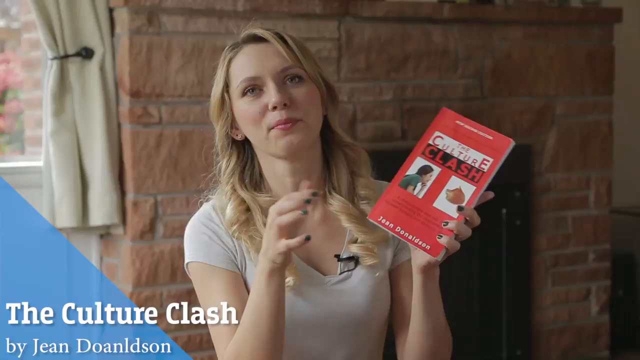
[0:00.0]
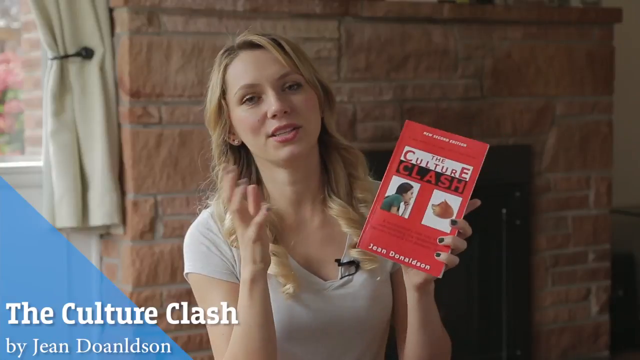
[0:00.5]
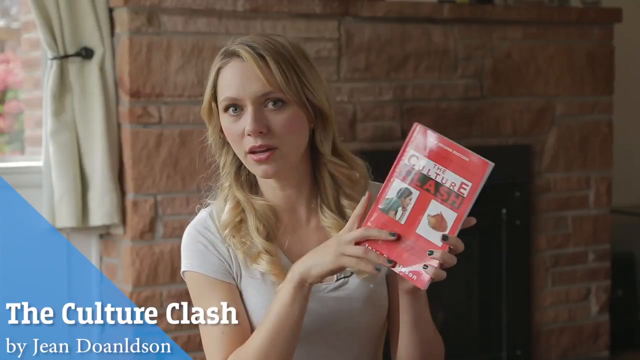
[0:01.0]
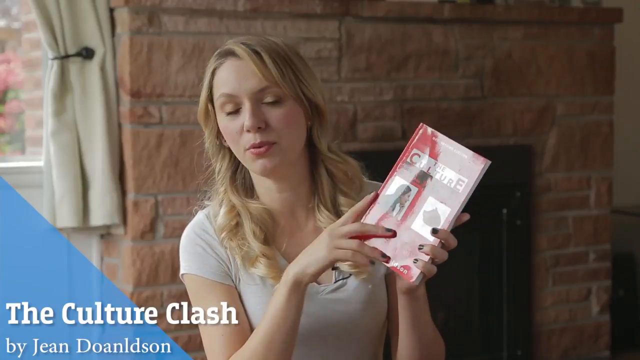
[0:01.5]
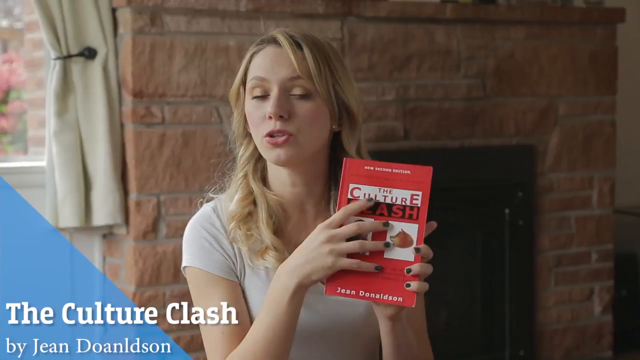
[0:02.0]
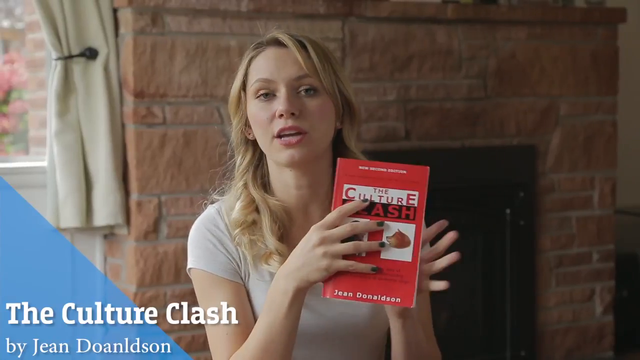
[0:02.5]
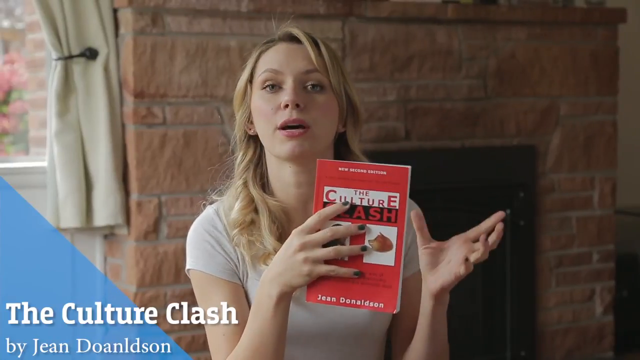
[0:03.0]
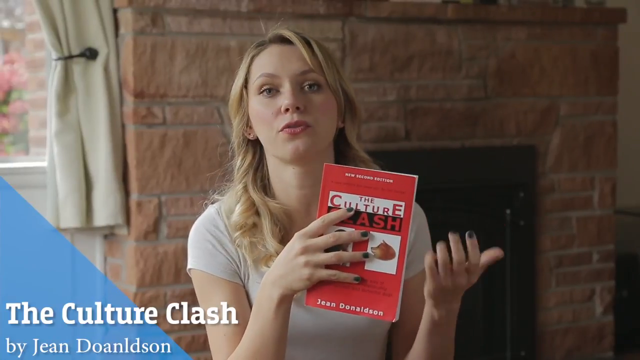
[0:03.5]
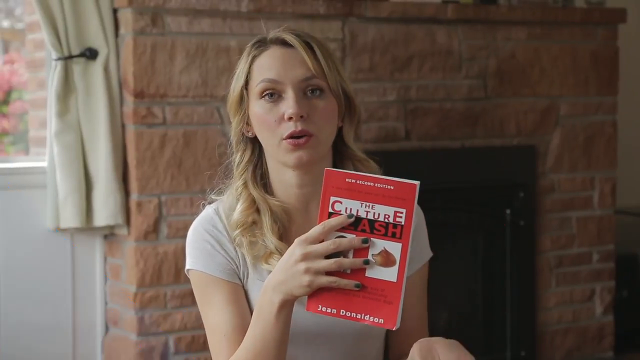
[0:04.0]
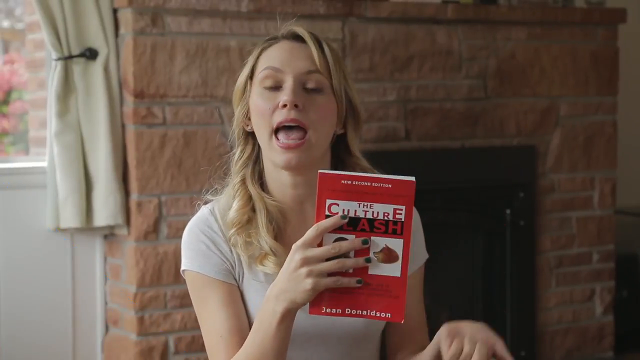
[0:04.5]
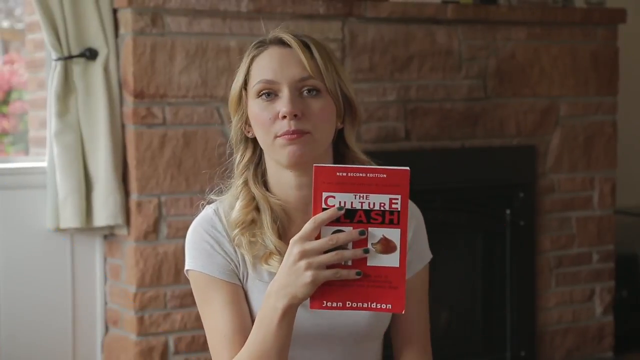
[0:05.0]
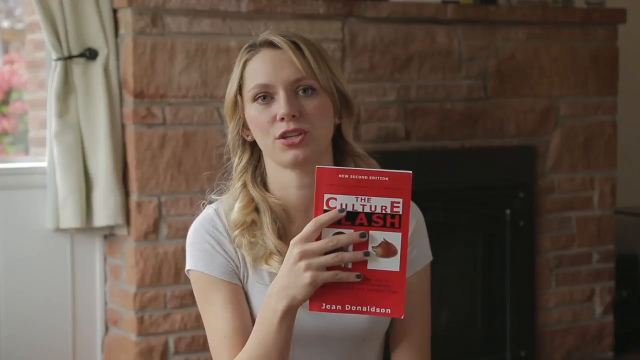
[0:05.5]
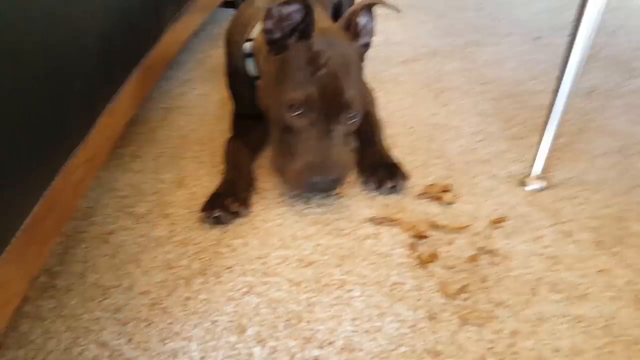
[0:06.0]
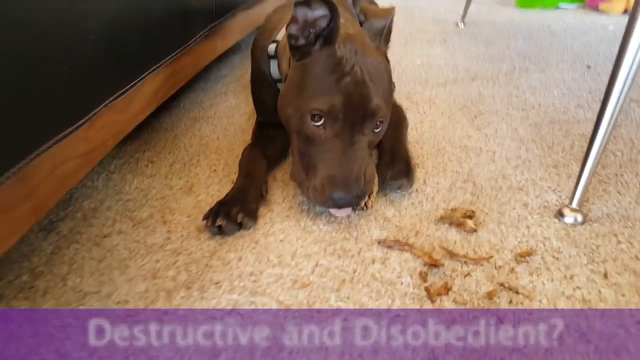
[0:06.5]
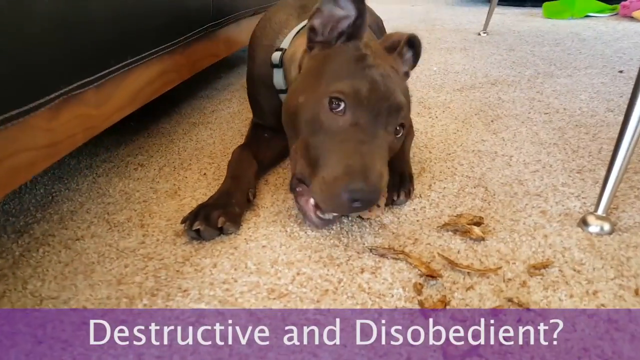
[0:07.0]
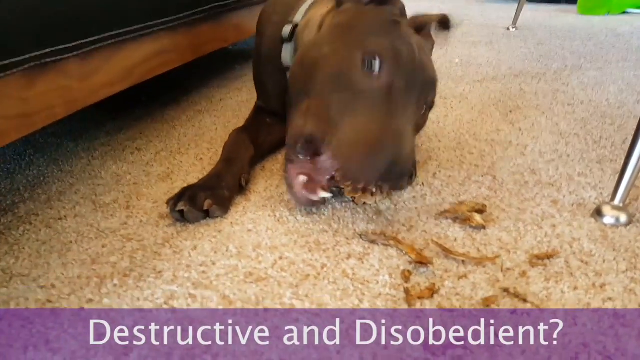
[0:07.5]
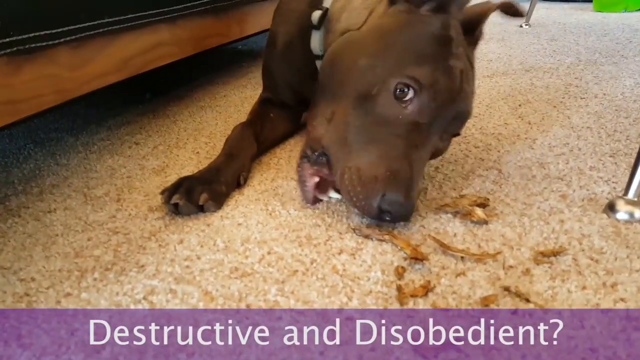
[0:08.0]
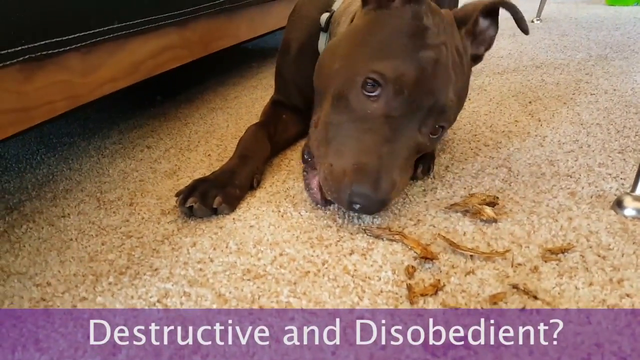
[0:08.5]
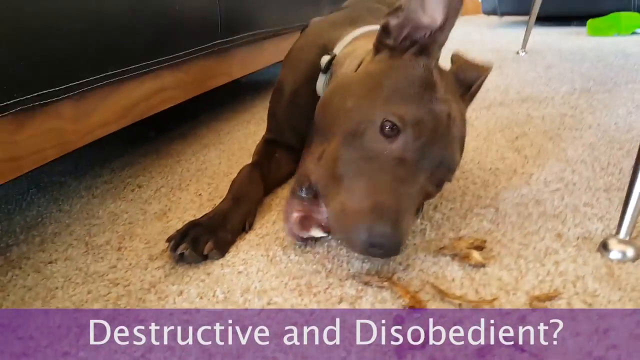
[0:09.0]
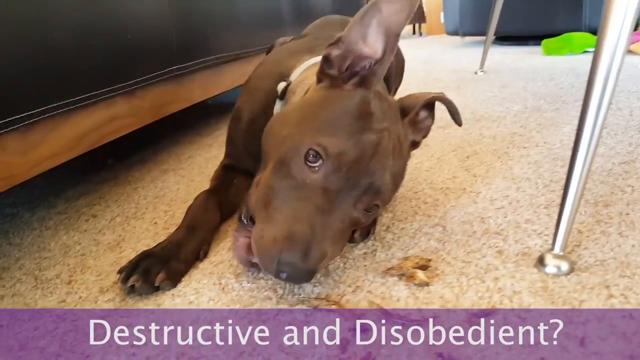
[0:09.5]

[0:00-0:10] The video opens on a white woman in her mid to late 20s holding up a red book. Her fingernails are painted, and she is standing behind a brick house, with the window and curtain of the house visible. The book is titled "culture clash", and its cover shows what looks like a human being facing what is probably an animal. The name of the book's author is also visible. Next, a brown dog is shown eating on the carpet, looking at the camera while it eats.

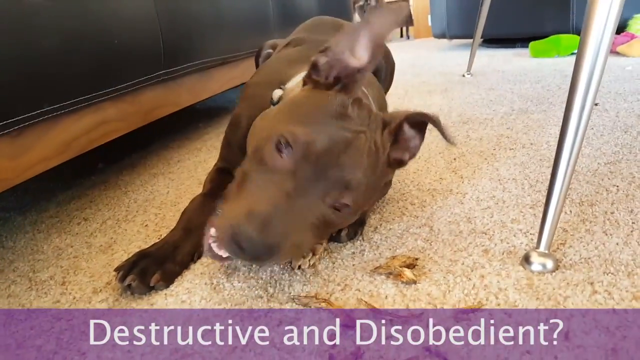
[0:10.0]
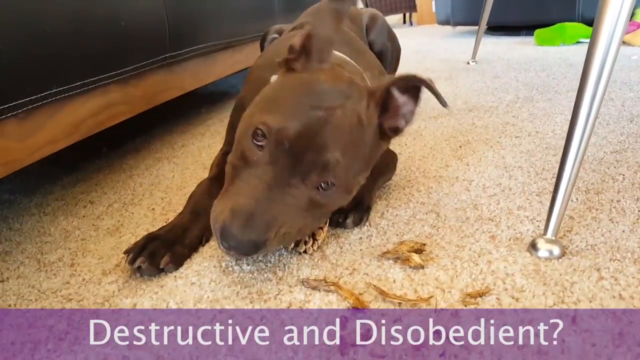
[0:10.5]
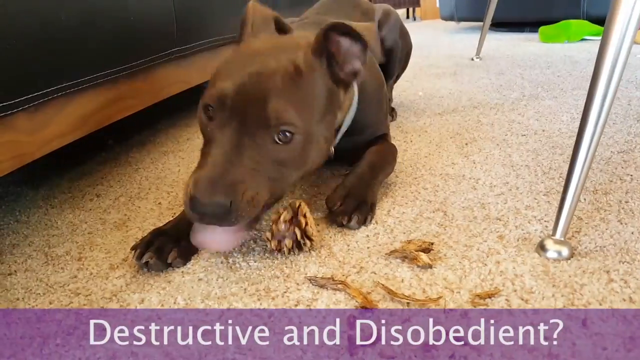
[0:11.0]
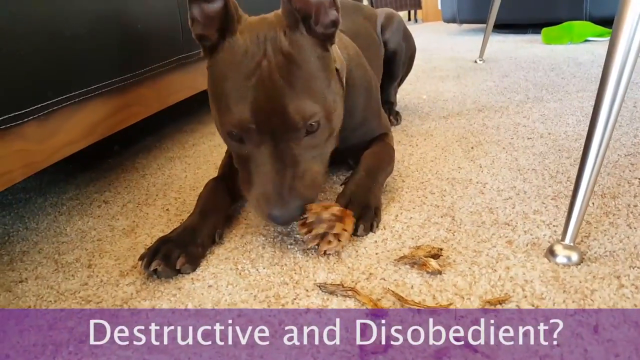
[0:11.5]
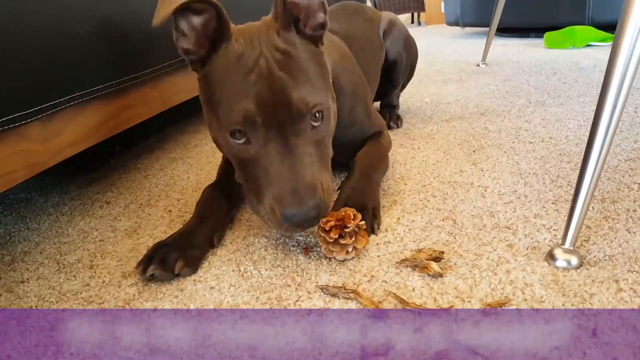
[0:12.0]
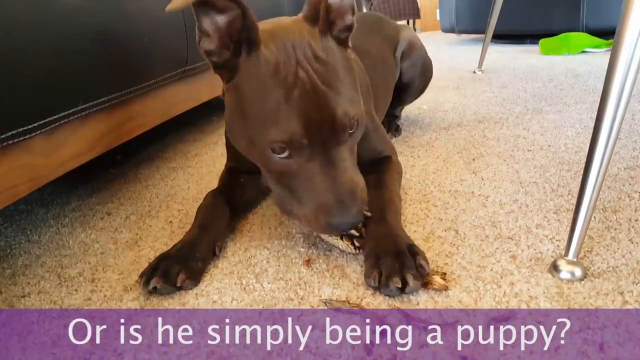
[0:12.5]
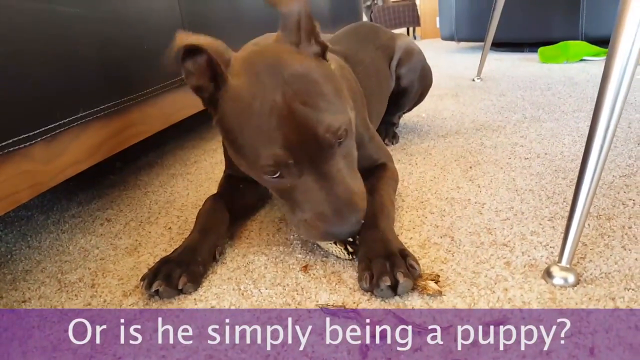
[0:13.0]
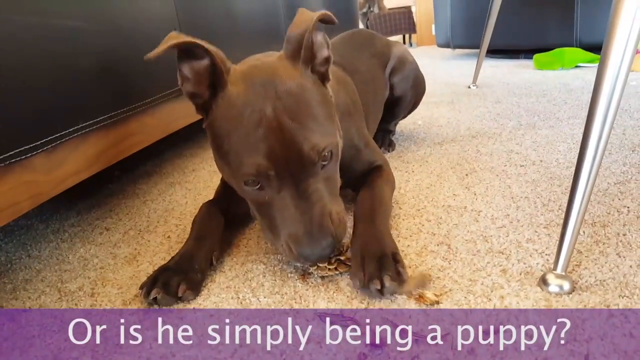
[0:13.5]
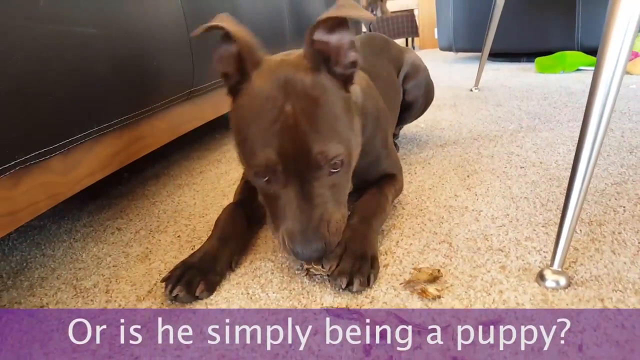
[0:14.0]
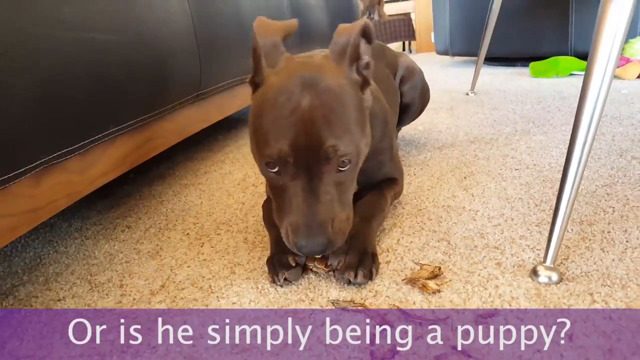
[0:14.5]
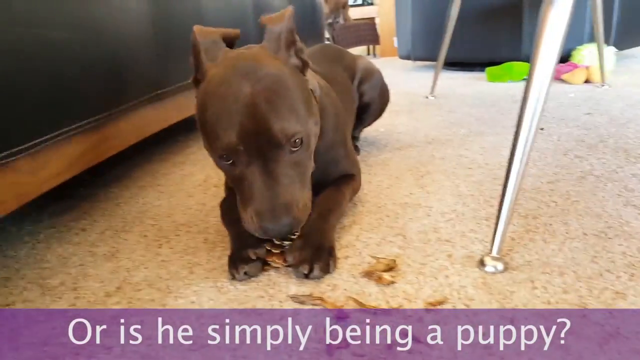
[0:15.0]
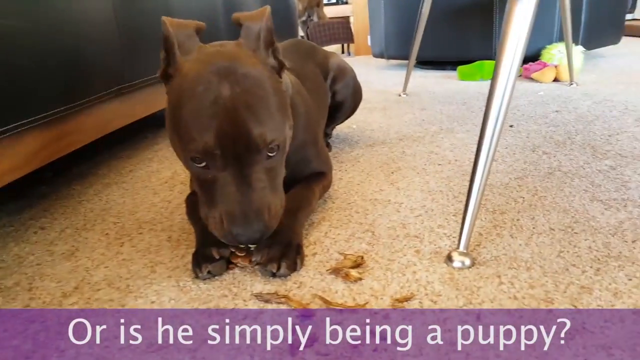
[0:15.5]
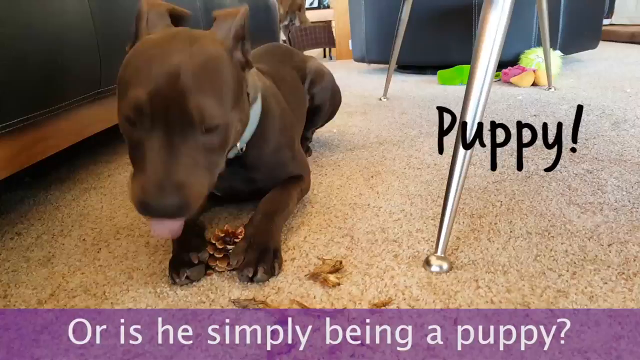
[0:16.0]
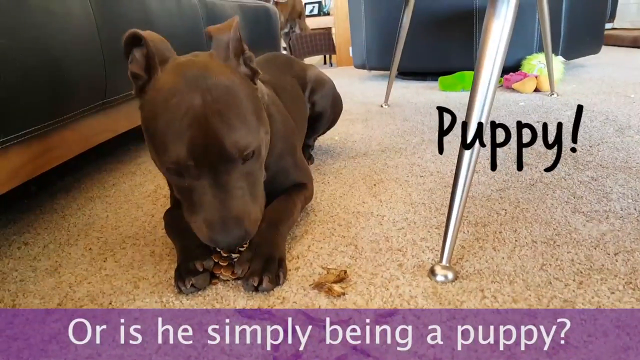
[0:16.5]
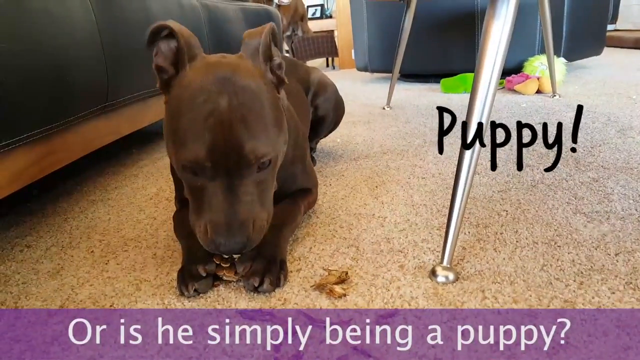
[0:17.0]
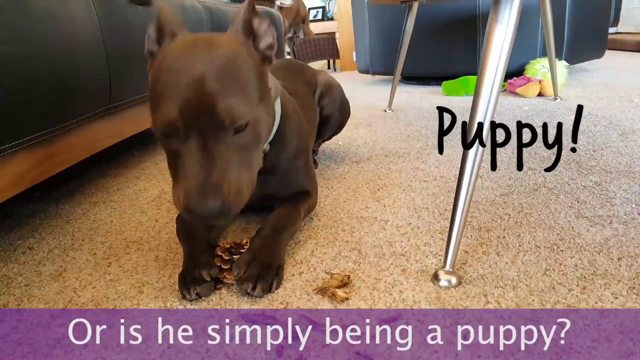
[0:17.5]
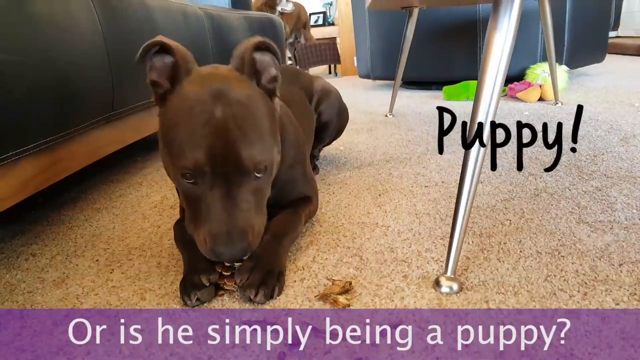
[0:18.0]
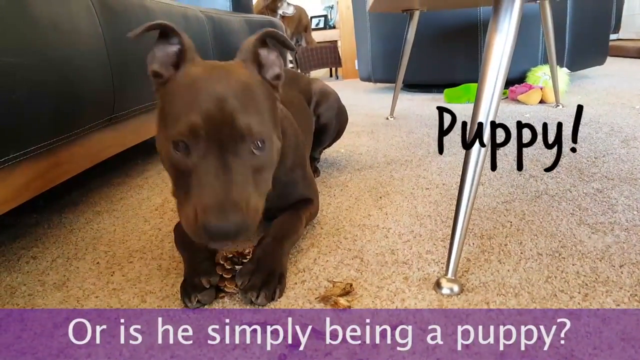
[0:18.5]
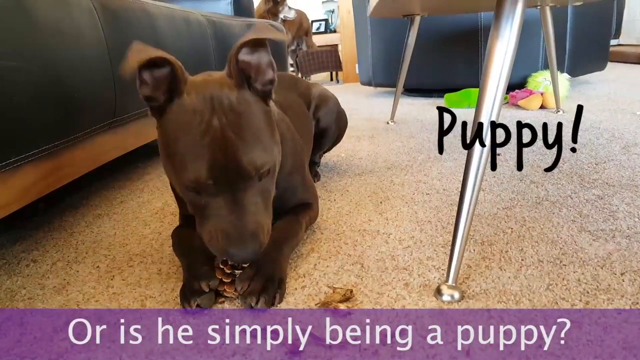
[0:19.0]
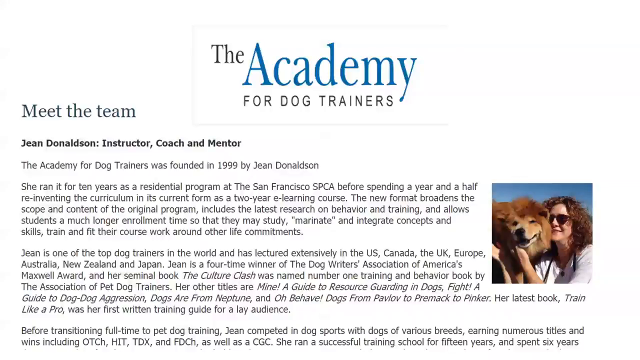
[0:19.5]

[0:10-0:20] The brown dog continues eating on the carpet, though exactly what it is eating cannot be seen. The word "puppy" is written in black on the side. Briefly, other text appears, like an academic pamphlet, reading "the academy meet the team". Beneath the eating dog is the text "destructive or is it simply being a puppy?"